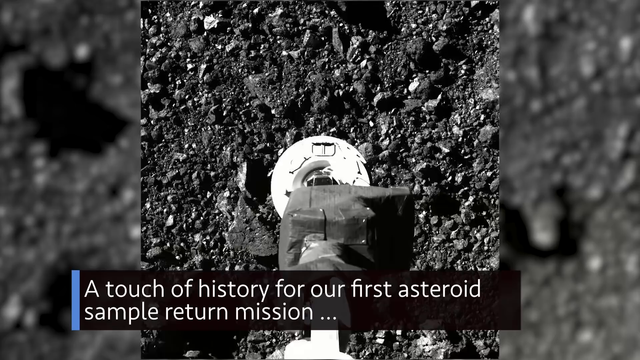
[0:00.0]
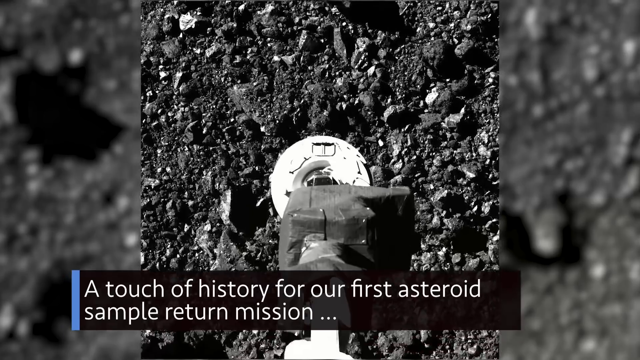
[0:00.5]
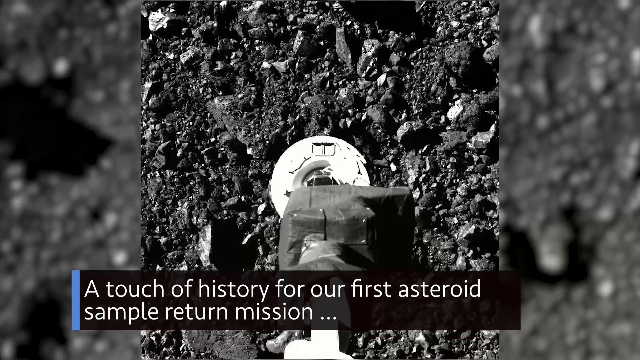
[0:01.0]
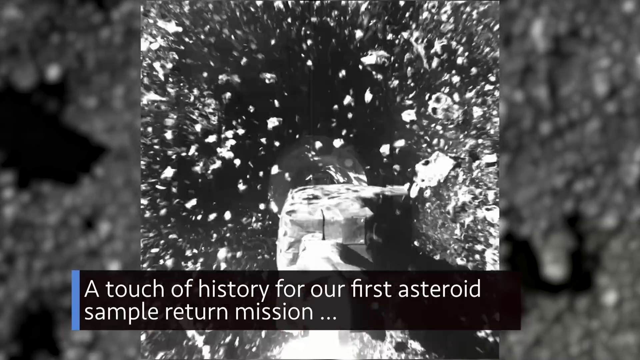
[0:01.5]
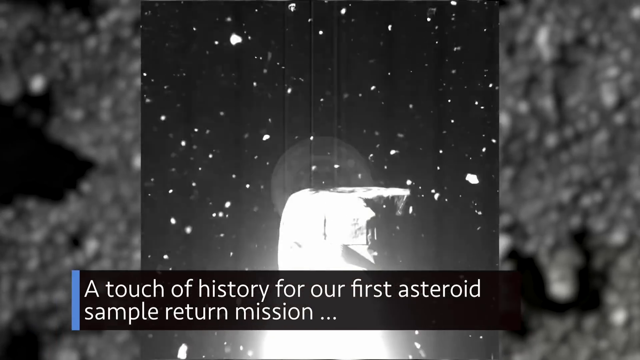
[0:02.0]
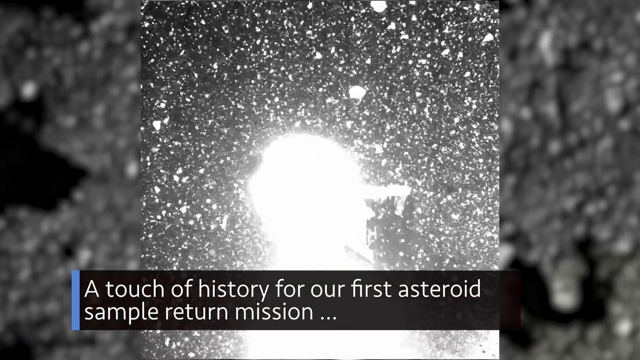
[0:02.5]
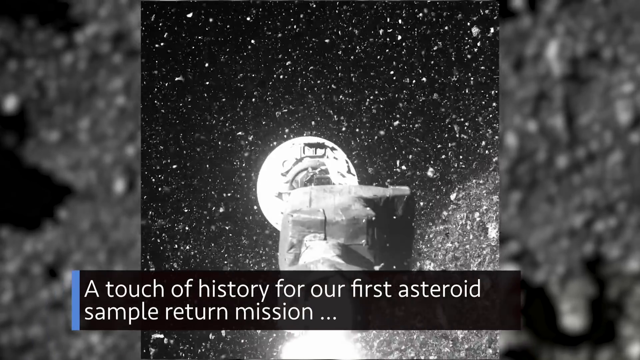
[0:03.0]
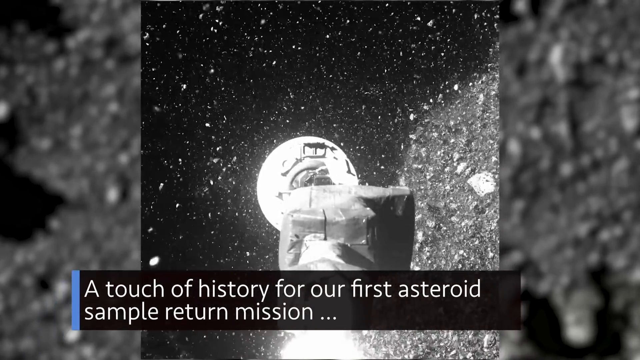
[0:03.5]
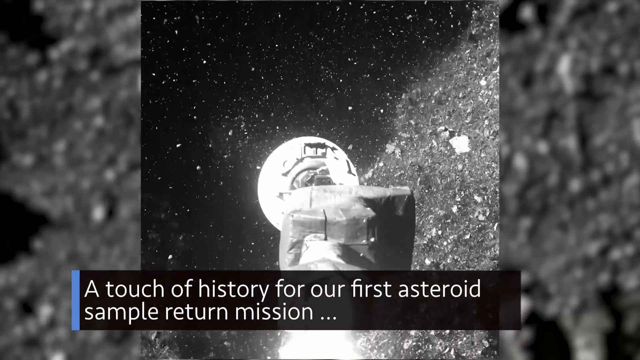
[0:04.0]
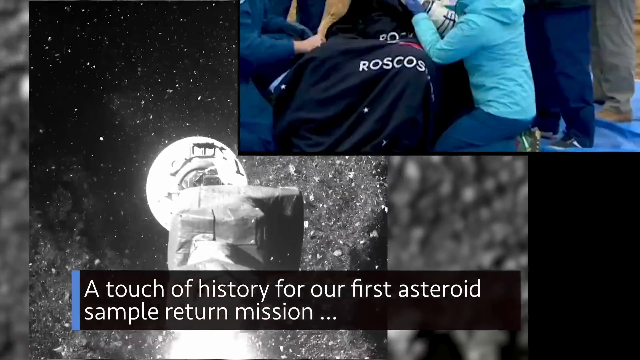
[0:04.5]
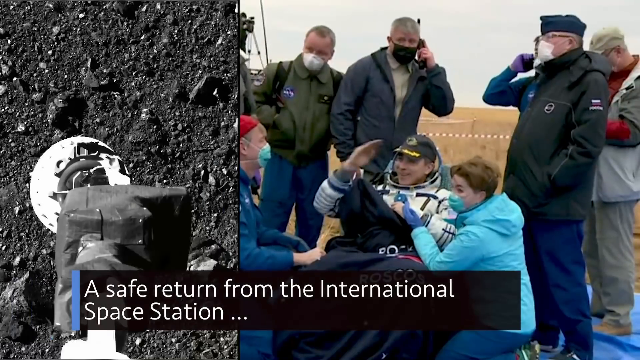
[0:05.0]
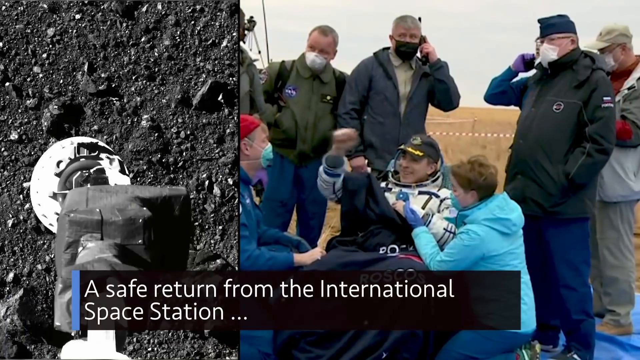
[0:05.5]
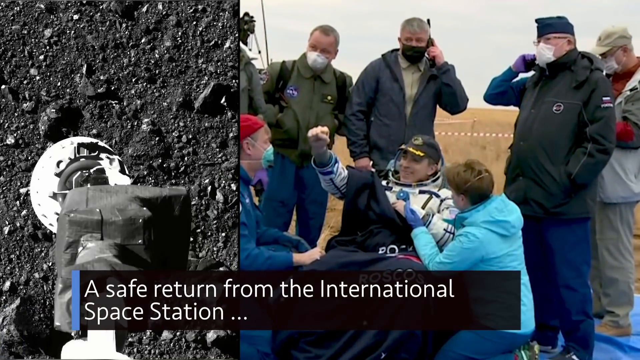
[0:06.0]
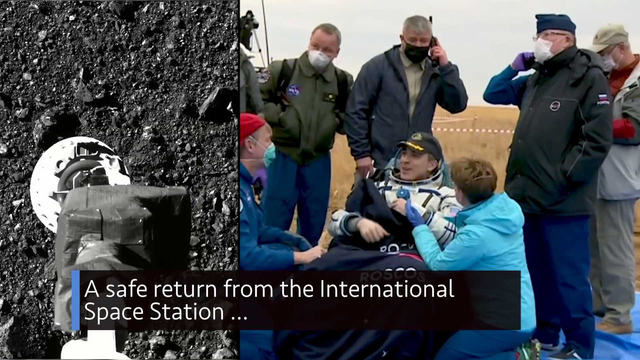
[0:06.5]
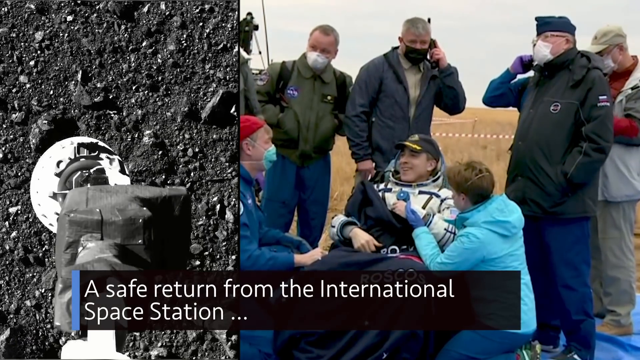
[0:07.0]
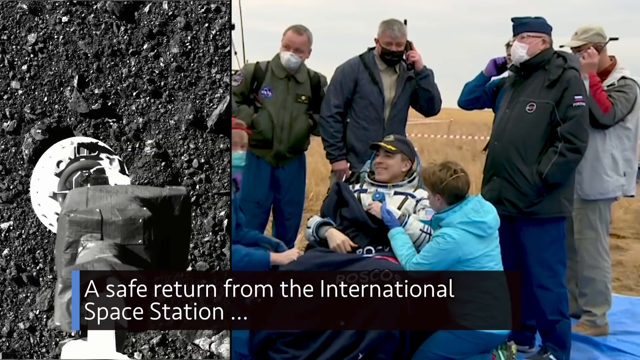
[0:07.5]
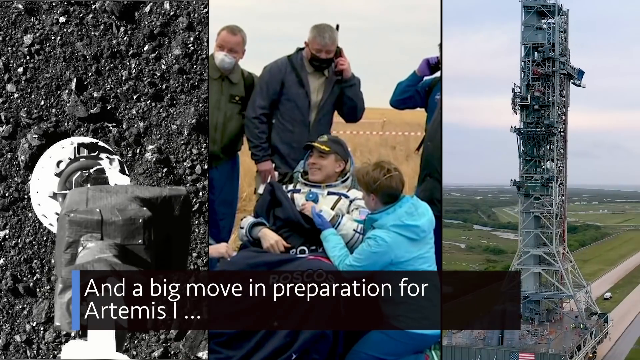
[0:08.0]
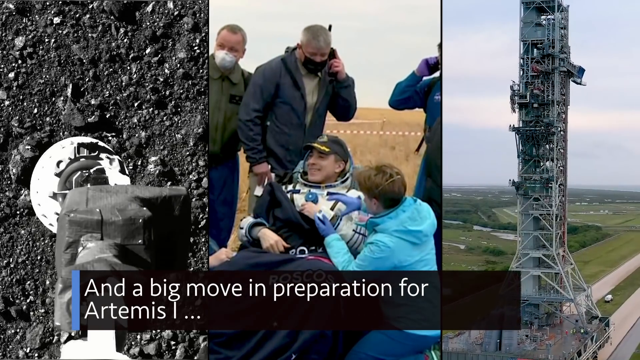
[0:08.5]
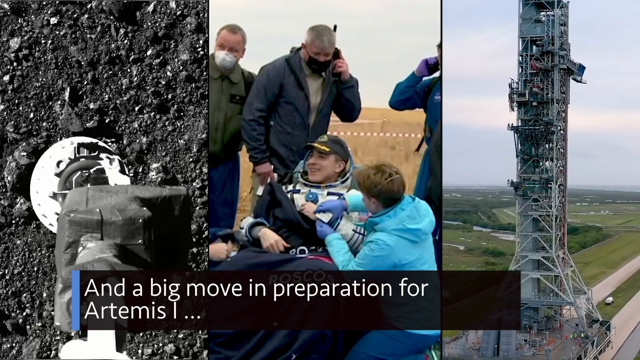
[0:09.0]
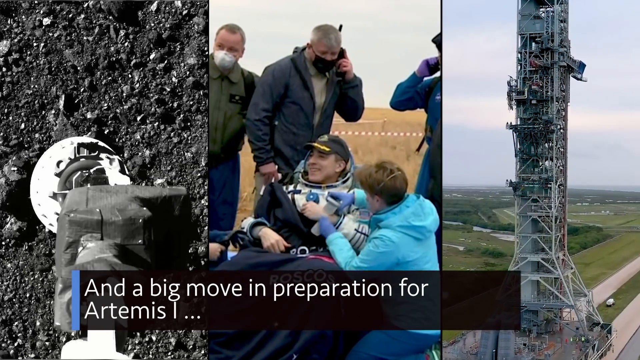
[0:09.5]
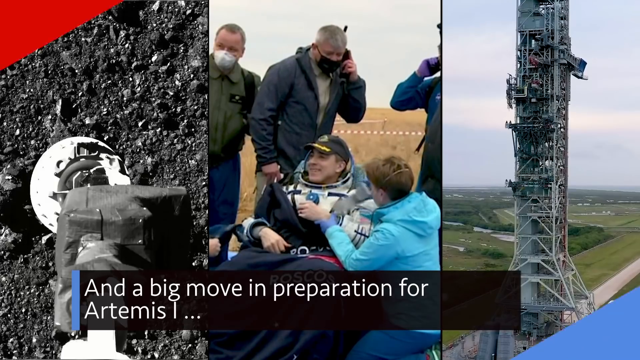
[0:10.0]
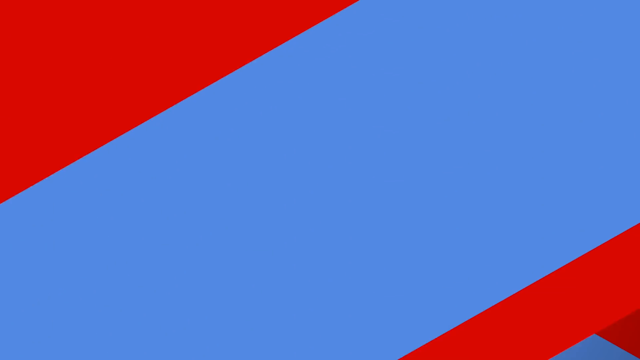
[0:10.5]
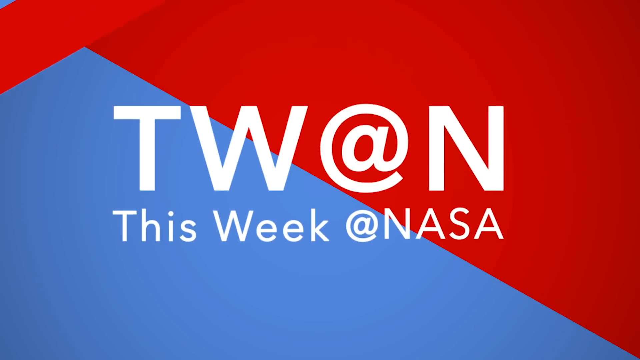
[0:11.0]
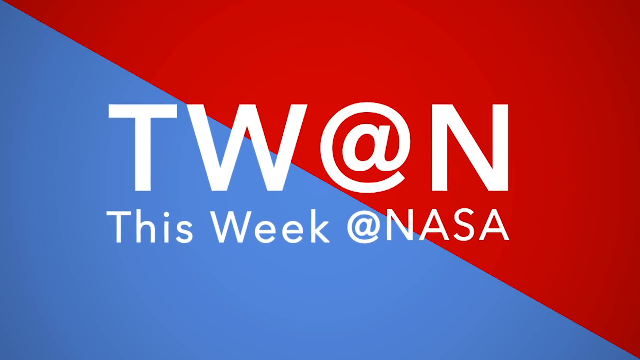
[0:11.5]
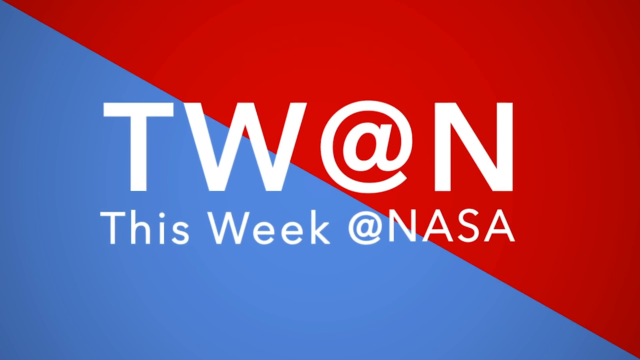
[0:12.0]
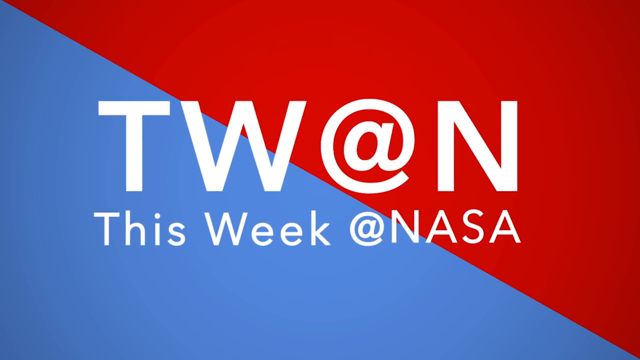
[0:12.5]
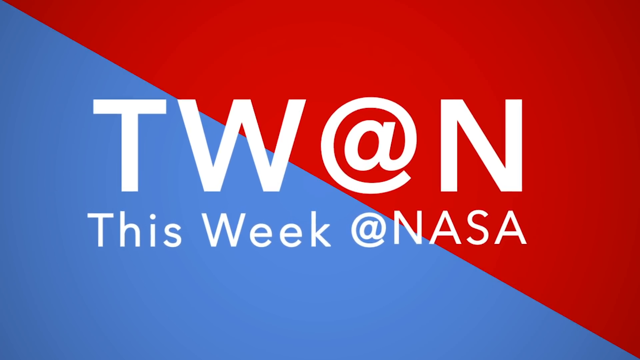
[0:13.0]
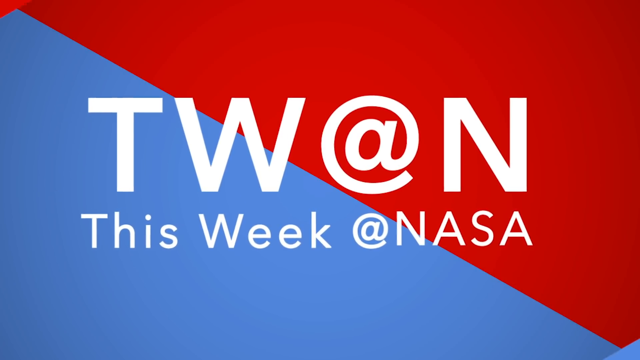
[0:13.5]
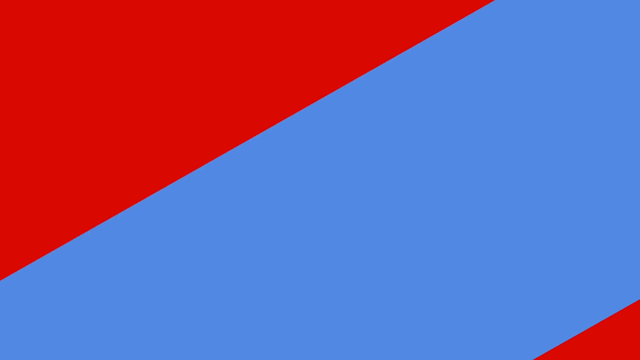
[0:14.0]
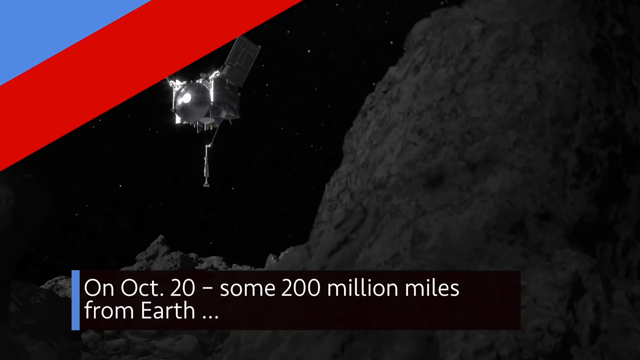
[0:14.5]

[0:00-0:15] What looks like a piece of machinery digs into what is apparently an asteroid. A group of people is on the ground: one person, who looks like an astronaut, sits on the ground while a few people stand around him, seemingly celebrating a successful mission. Captions in the video refer to a successful mission getting samples from an asteroid. The video appears to be created by NASA. A few of the people standing around the astronaut have phones in their hands.